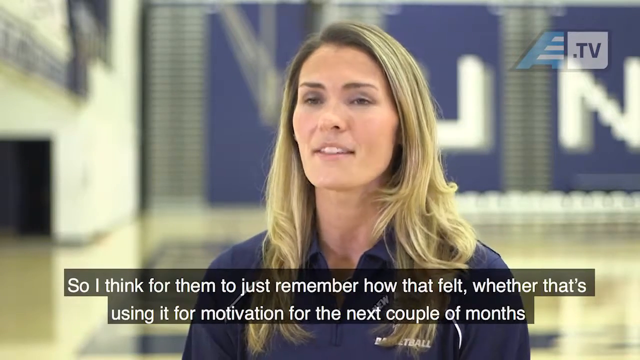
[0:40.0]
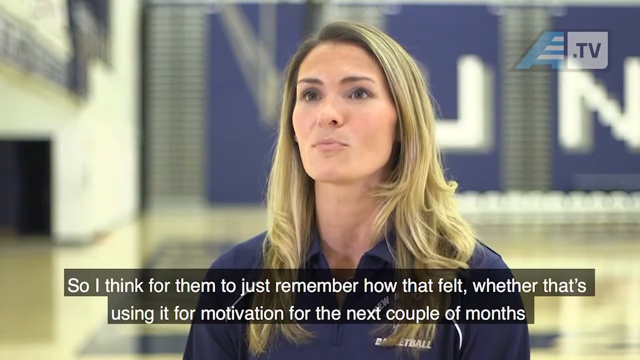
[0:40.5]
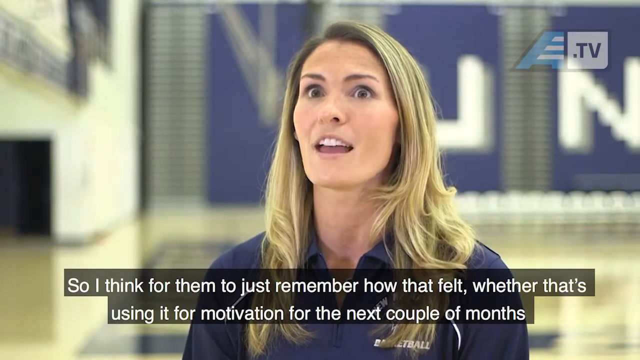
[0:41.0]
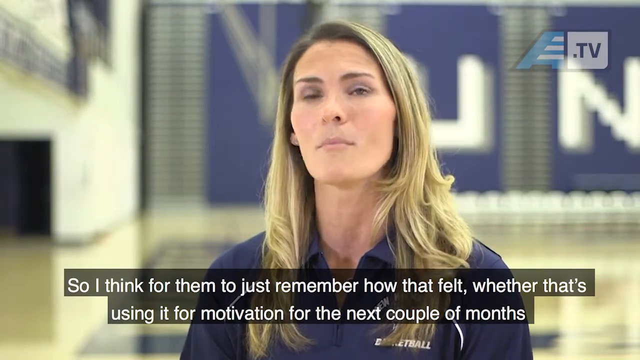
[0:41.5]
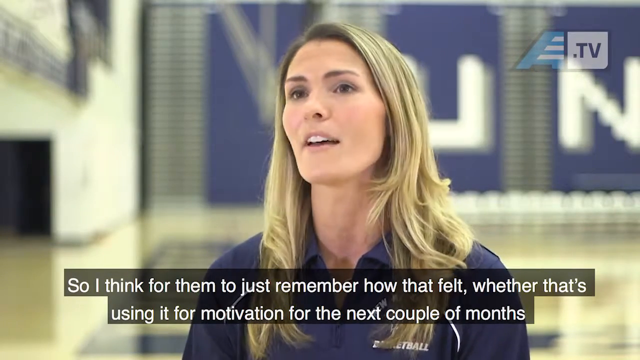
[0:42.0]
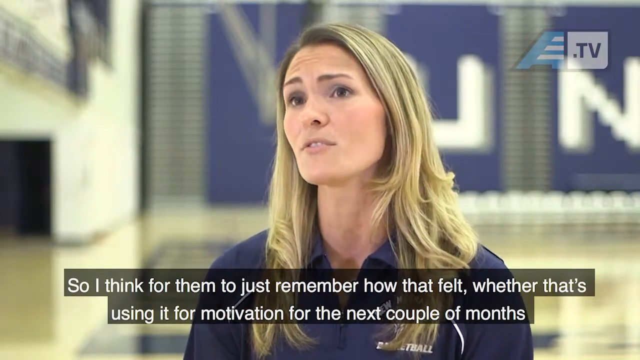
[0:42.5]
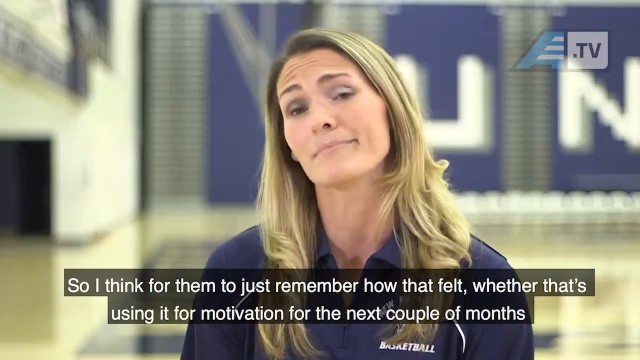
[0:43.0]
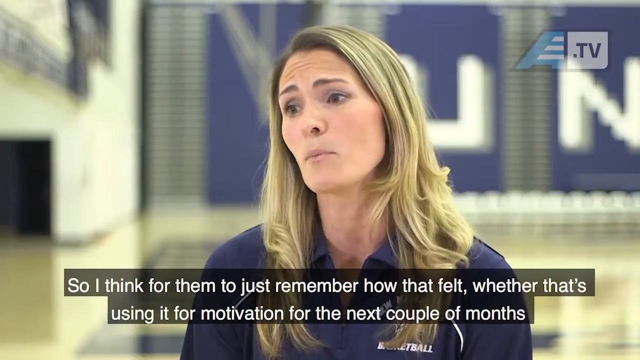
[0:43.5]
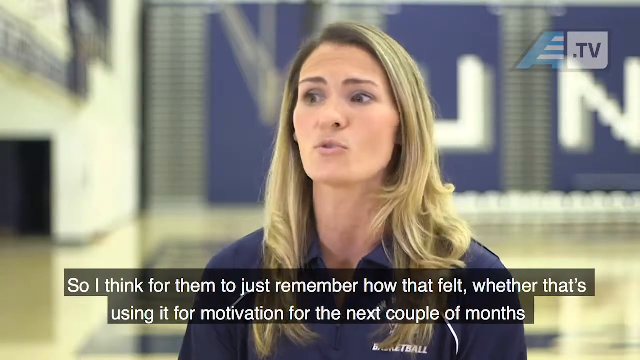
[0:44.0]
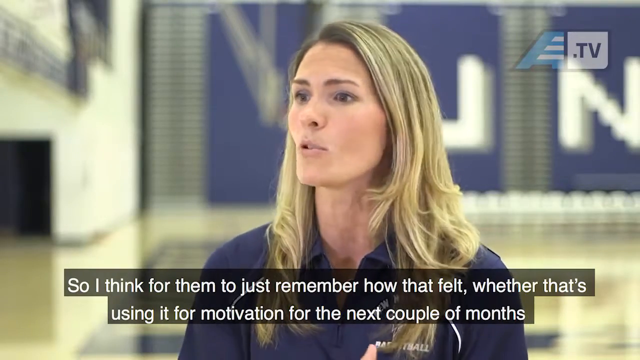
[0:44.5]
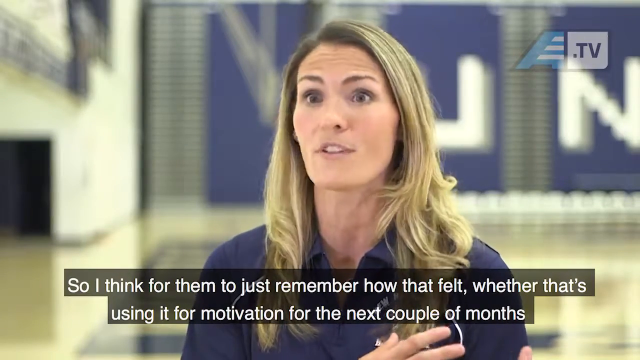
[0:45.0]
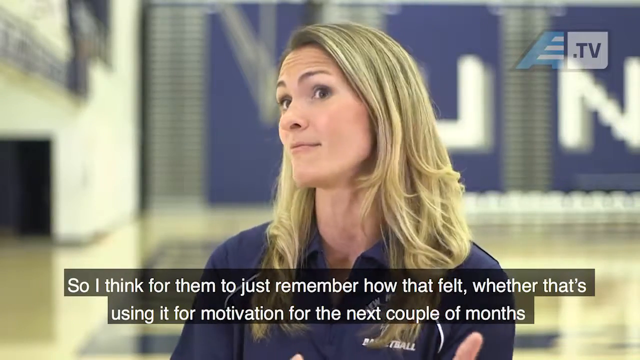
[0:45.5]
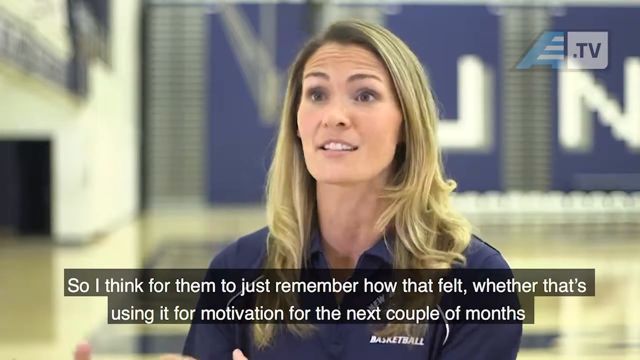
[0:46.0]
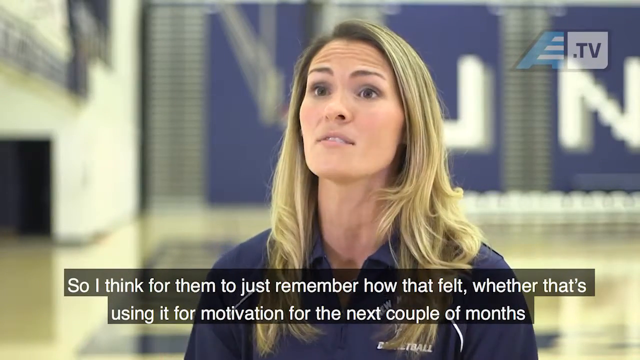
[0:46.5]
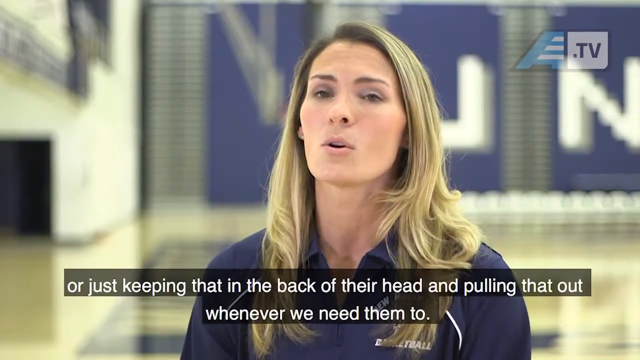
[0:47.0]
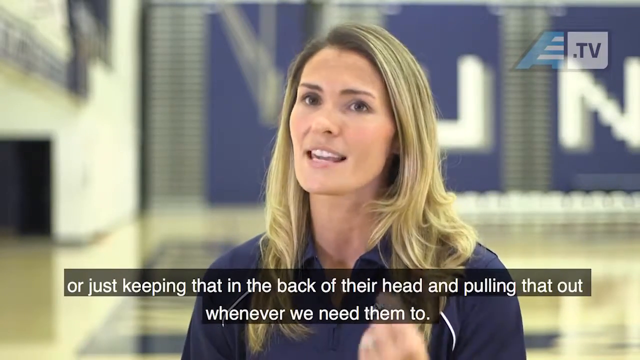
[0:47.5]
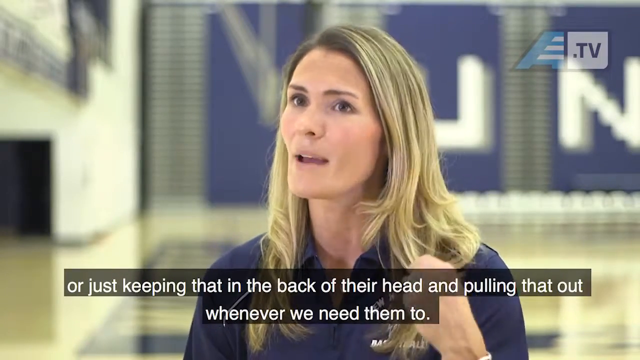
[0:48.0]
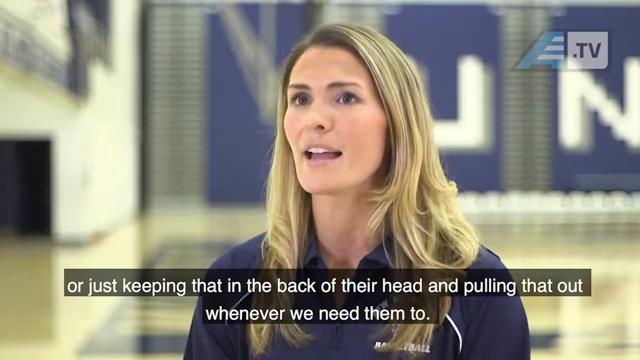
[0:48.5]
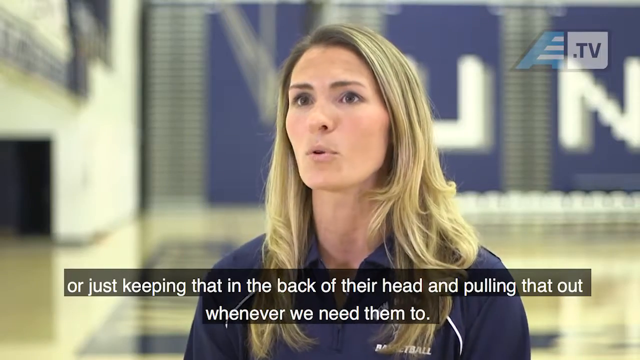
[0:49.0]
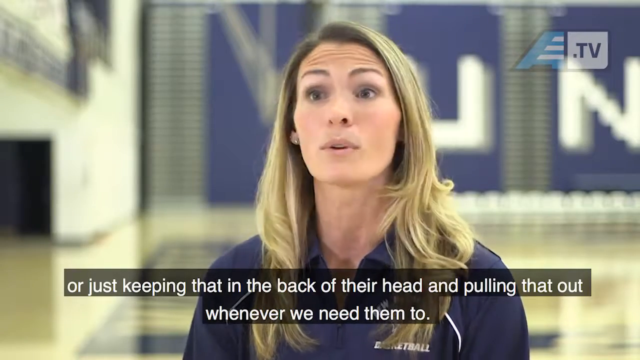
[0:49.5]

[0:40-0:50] In what appears to be an interview, a woman talks to the interviewer. She has very dirty blonde hair, appears to be Caucasian, and wears a blue blouse that is unzipped towards the collar area, with a team logo on the left side of her chest. She is standing on what appears to be a gym floor, with three banners behind her; the letters U and N can be seen on two of them. Overlaid subtitles read "So I think for them to just remember how that felt, whether that's using it for motivation for the next couple of months,". She widens her eyes and moves her head as she talks. New subtitles then read "or just keeping that in the back of their head and pulling that out whenever we need them to."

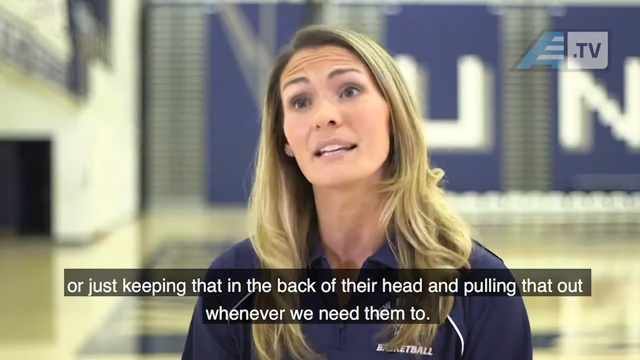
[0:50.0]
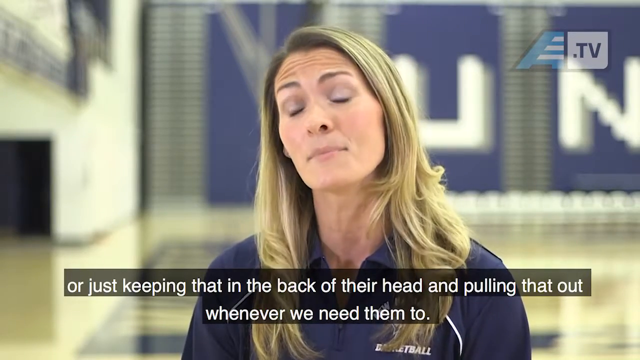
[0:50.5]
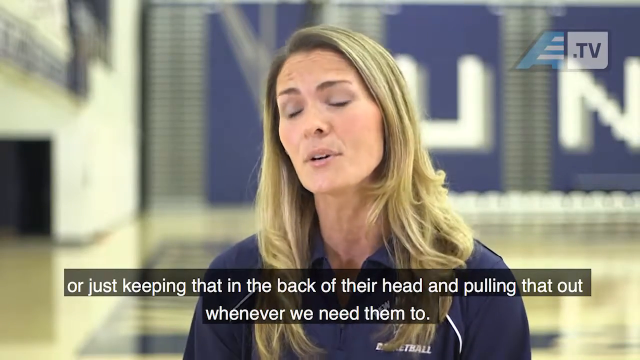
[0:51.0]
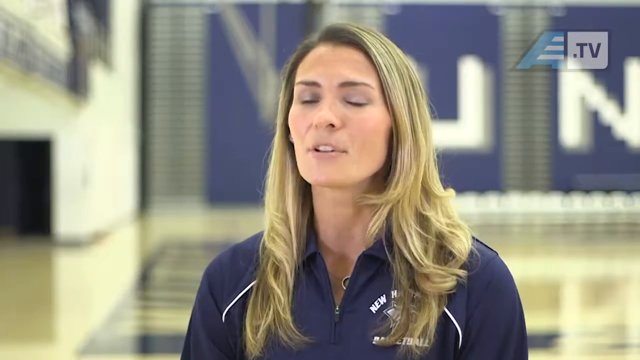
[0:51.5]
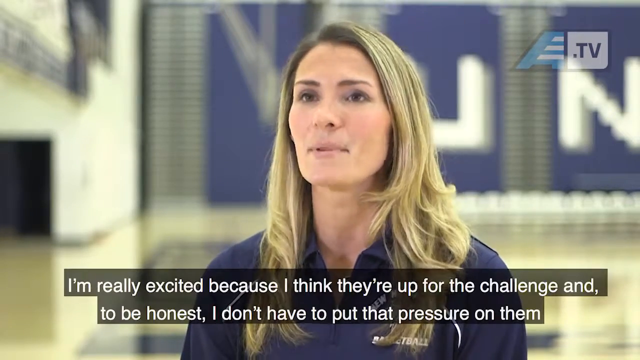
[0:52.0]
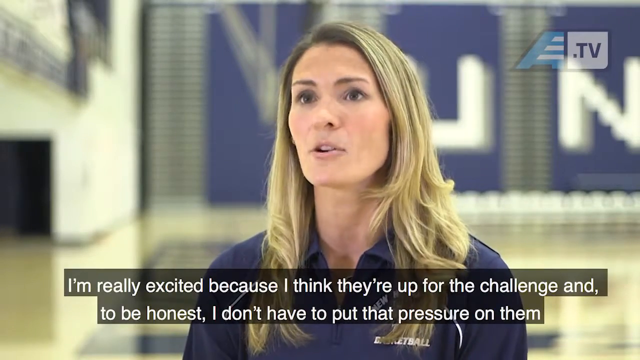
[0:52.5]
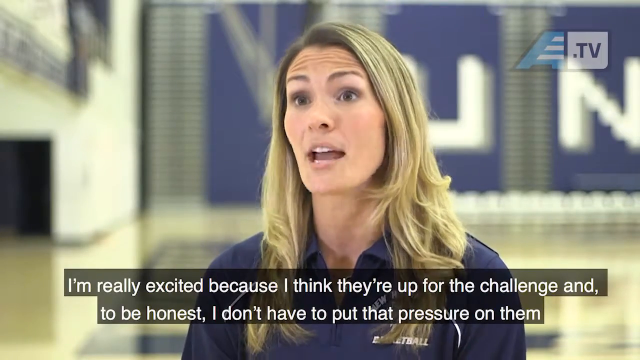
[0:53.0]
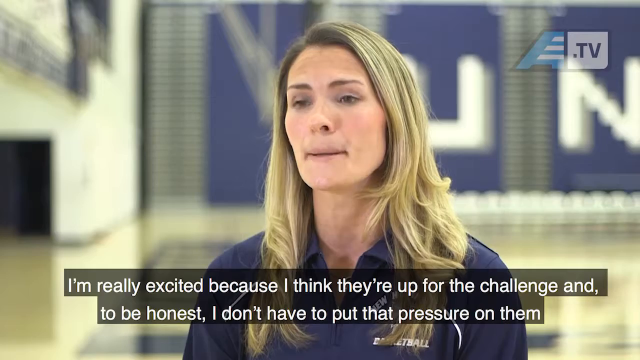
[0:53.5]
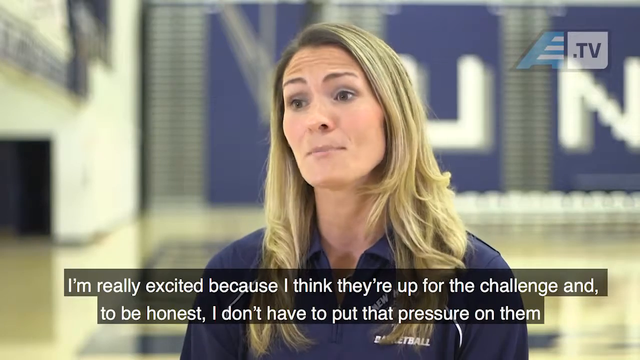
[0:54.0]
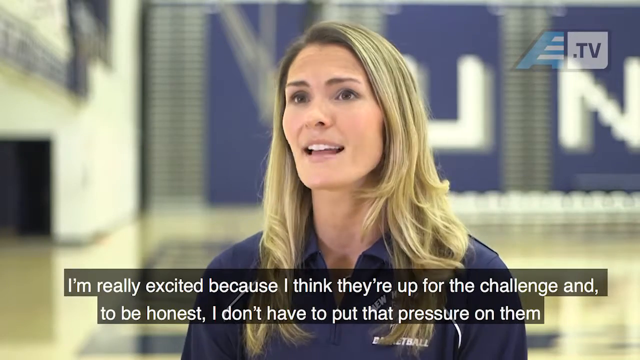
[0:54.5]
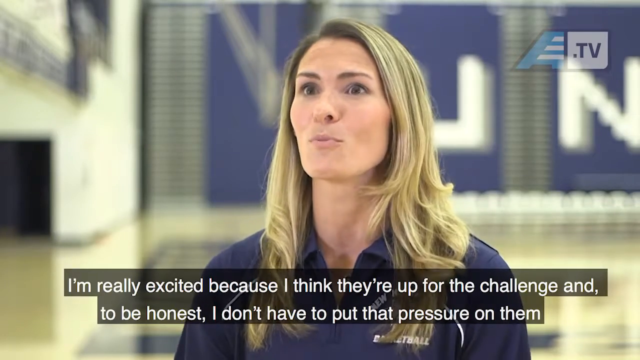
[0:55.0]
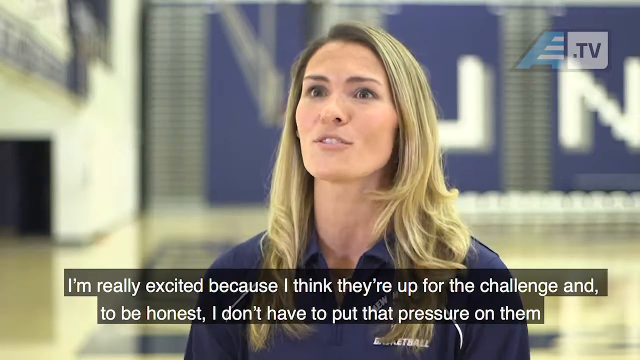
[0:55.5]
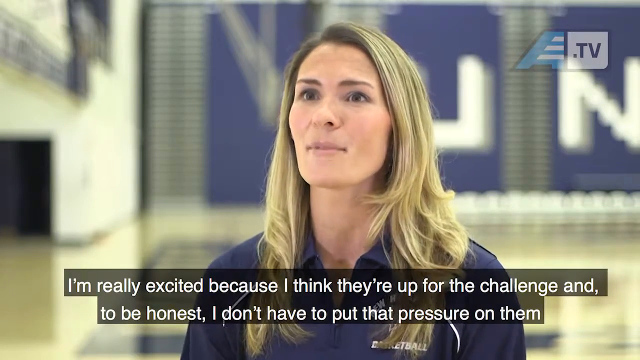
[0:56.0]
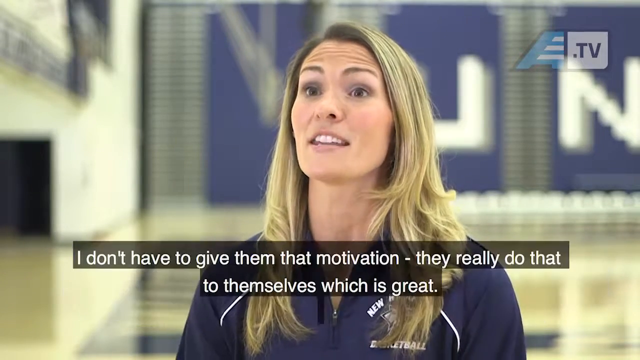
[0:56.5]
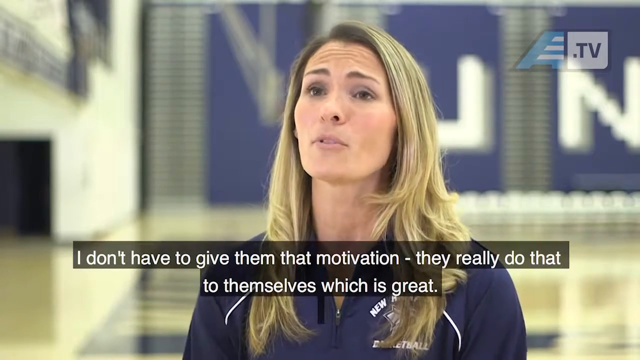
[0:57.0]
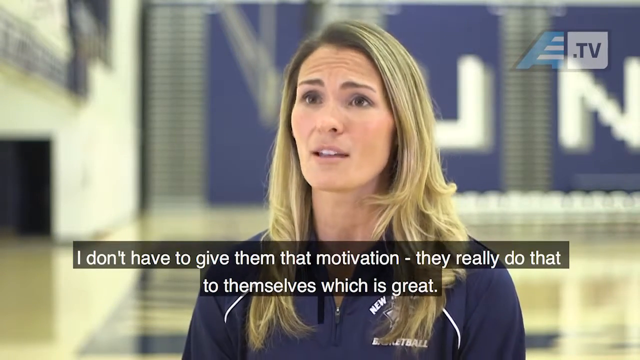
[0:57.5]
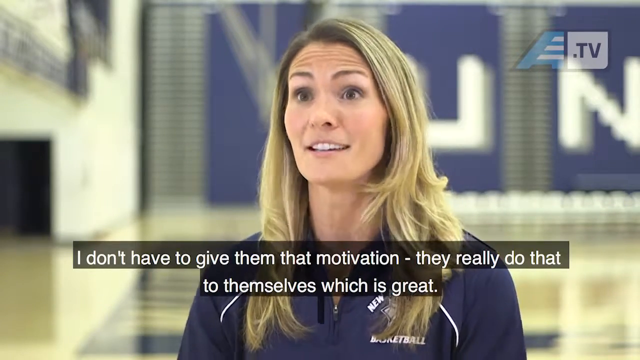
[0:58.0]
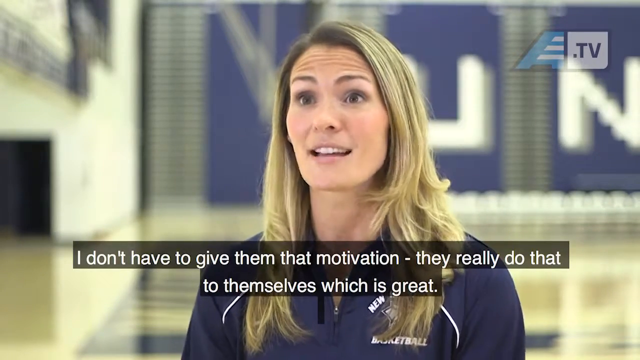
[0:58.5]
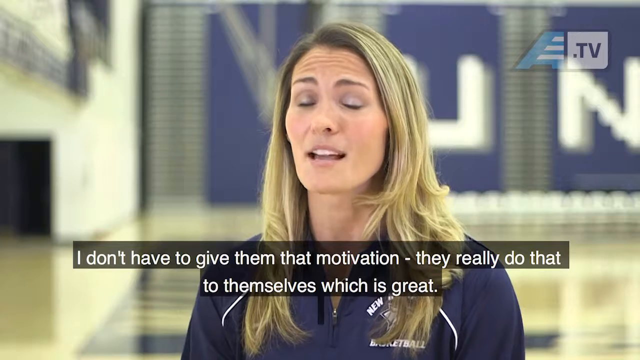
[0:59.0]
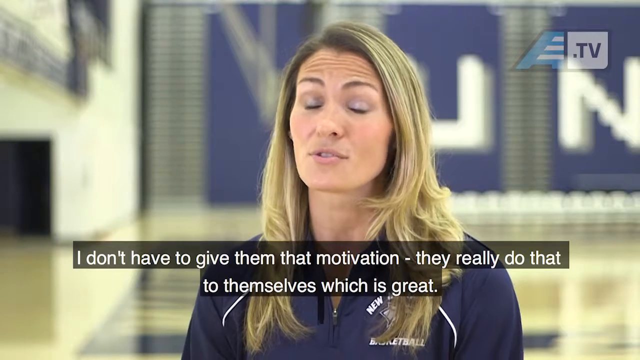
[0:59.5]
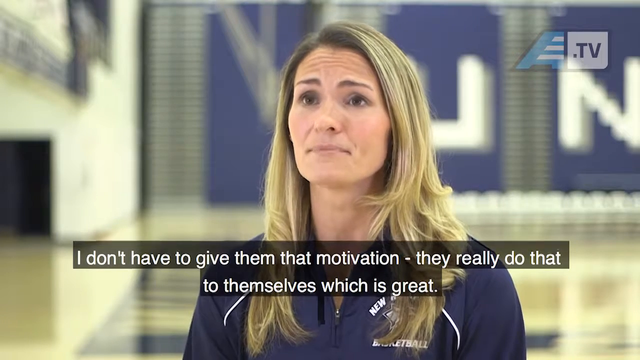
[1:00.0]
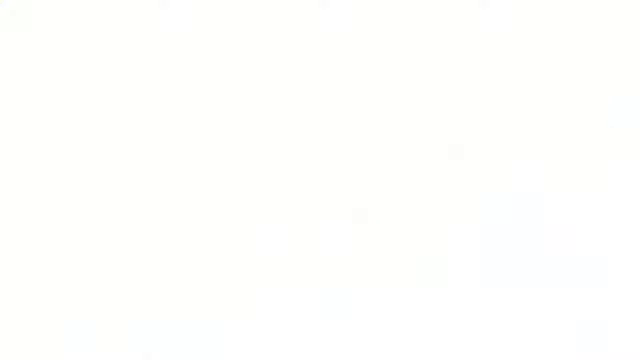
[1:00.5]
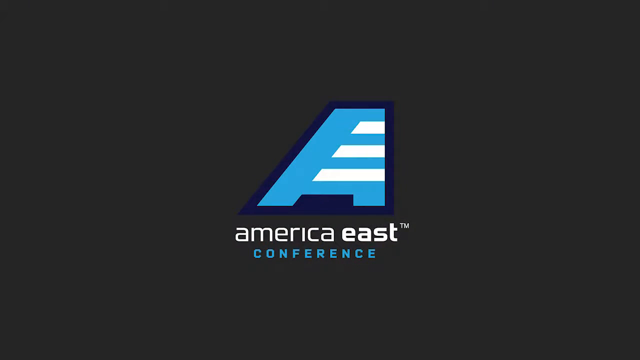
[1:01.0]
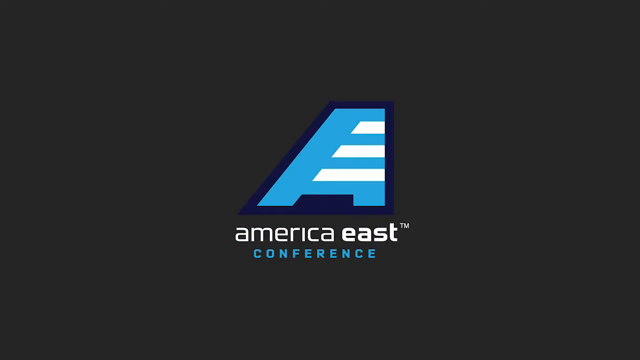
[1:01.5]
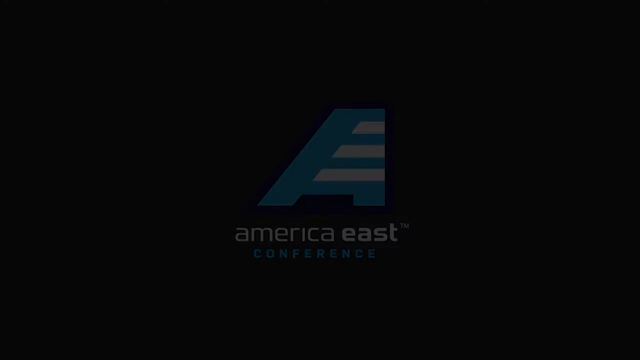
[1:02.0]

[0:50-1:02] What appears to be an interview with a coach shows a woman who appears to be Caucasian, with very dirty blonde hair, wearing a blue jersey unzipped around the neck area and with her team's emblem on the left side of her chest. She is standing inside what appears to be a gym. In the background are three banners, two of which have the letters UNN on them, and everything behind her is very blurred. Overlaid subtitles read "just keeping that in the back of their head and pulling that out whenever we need them to."